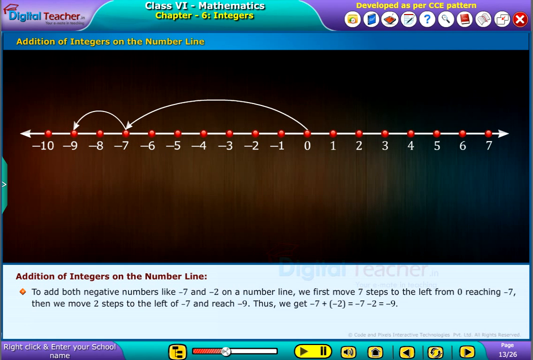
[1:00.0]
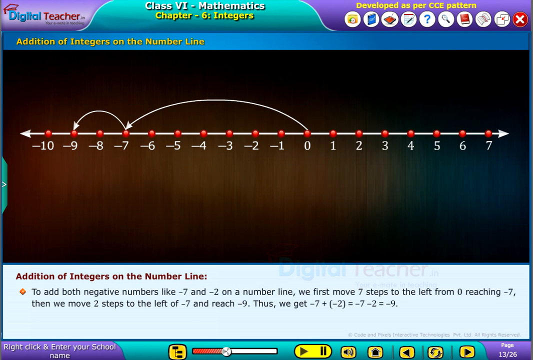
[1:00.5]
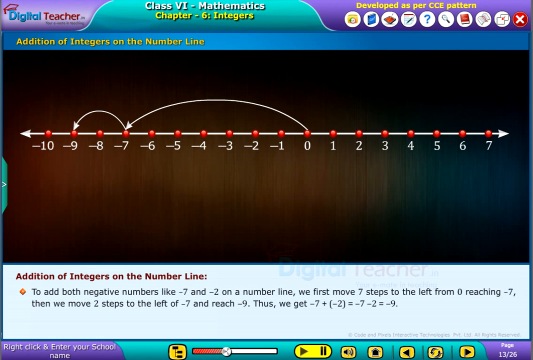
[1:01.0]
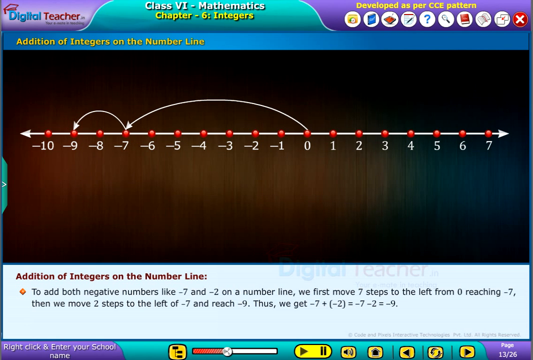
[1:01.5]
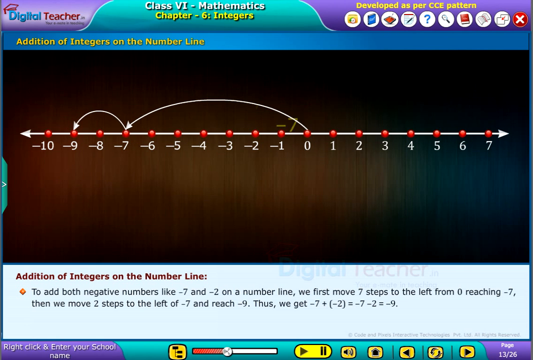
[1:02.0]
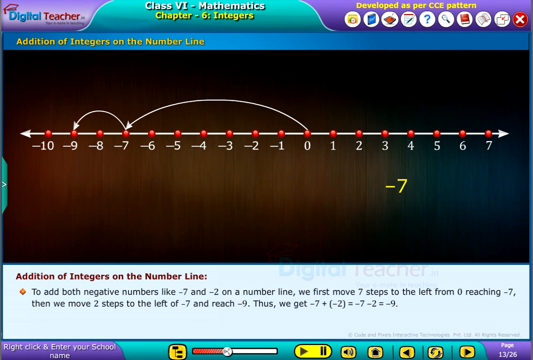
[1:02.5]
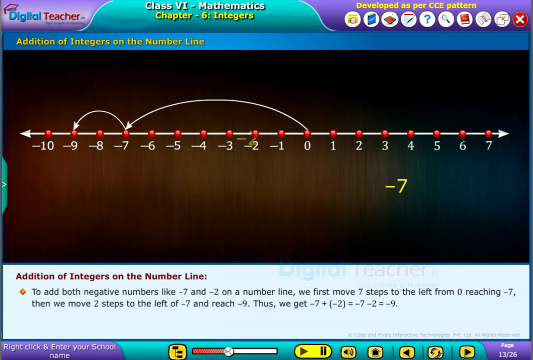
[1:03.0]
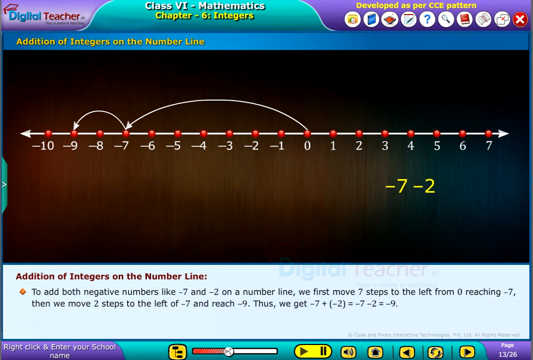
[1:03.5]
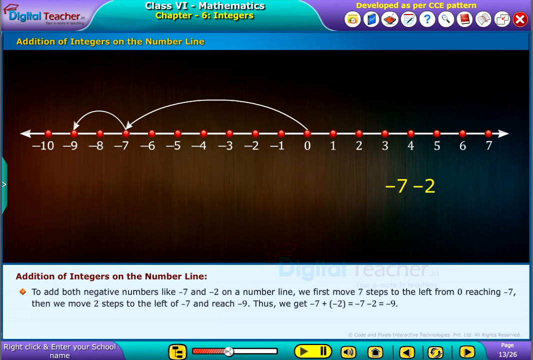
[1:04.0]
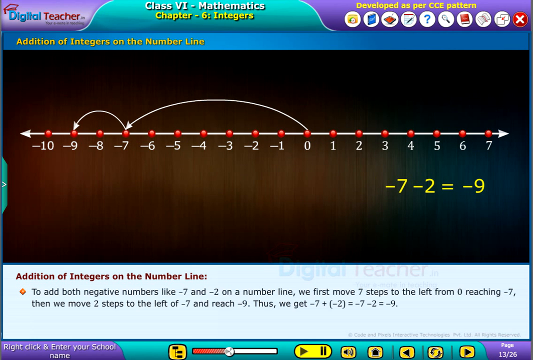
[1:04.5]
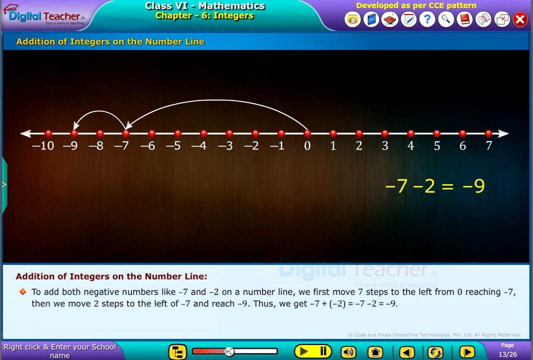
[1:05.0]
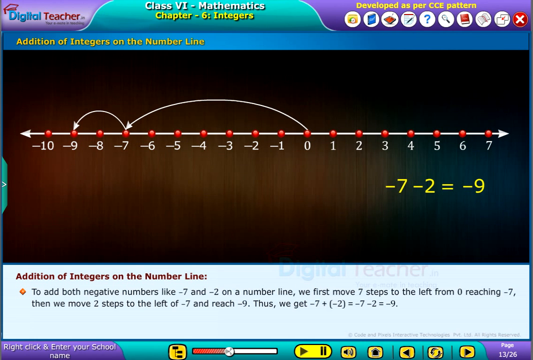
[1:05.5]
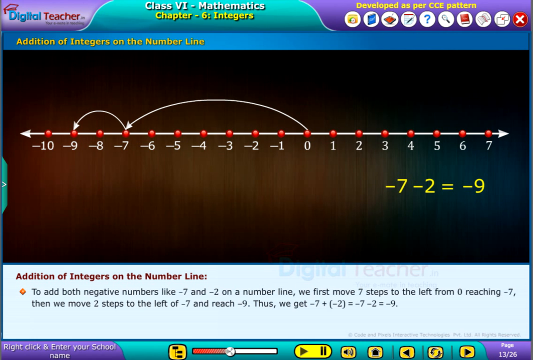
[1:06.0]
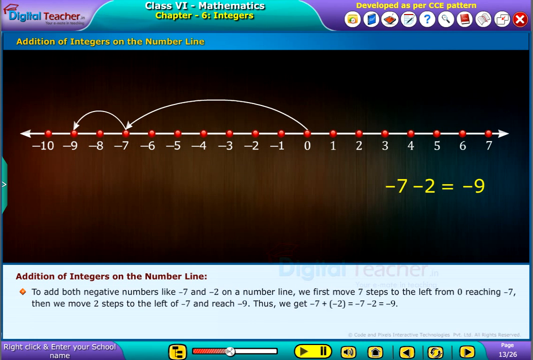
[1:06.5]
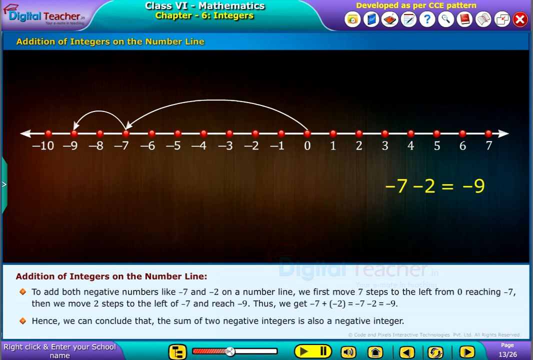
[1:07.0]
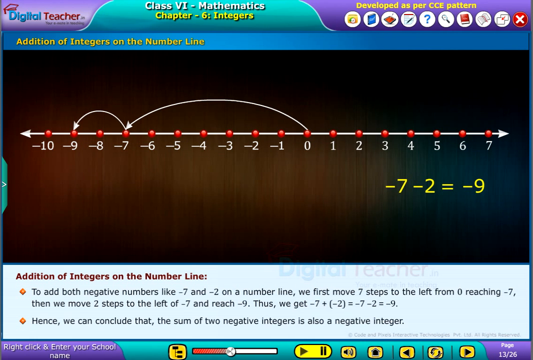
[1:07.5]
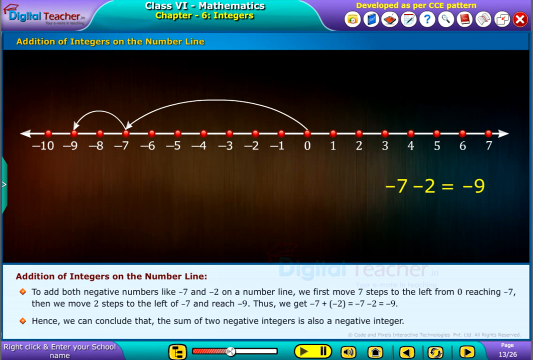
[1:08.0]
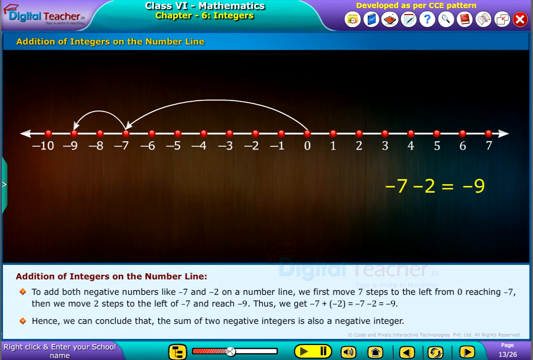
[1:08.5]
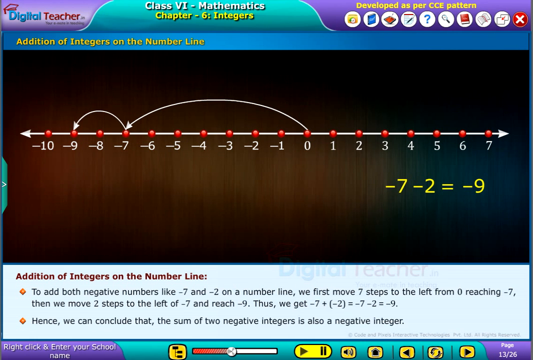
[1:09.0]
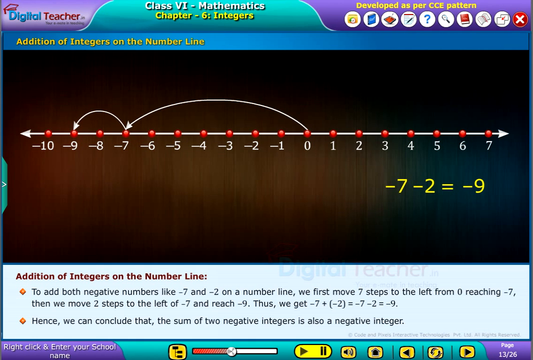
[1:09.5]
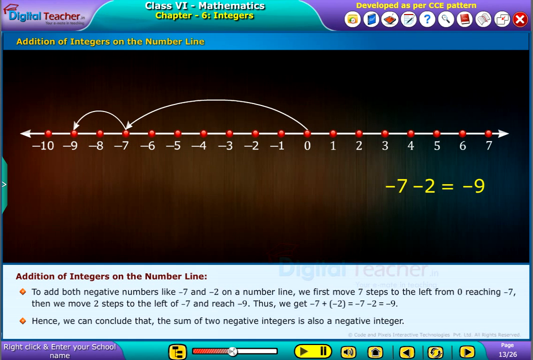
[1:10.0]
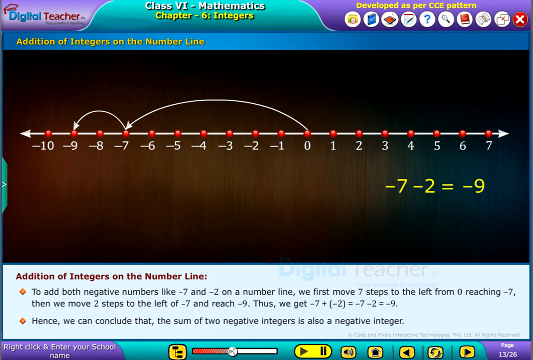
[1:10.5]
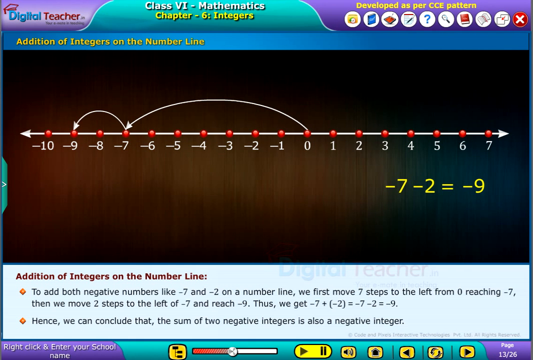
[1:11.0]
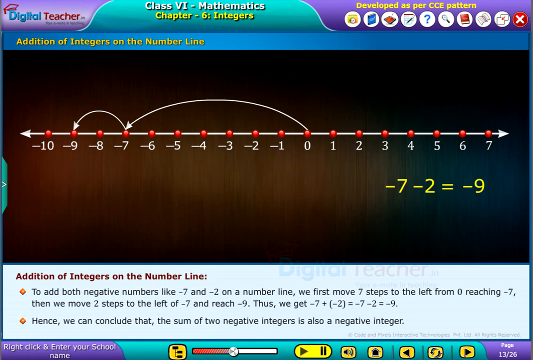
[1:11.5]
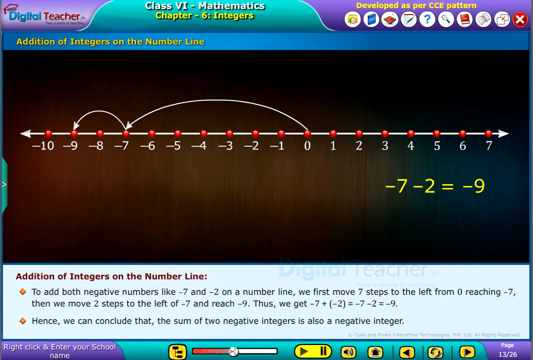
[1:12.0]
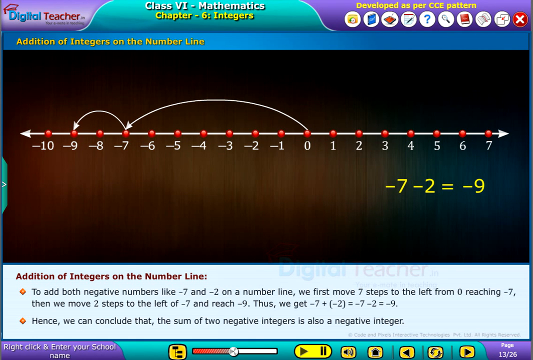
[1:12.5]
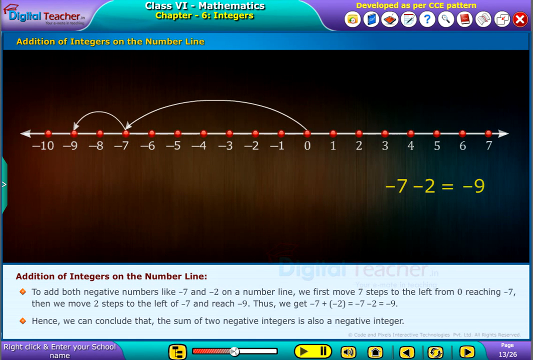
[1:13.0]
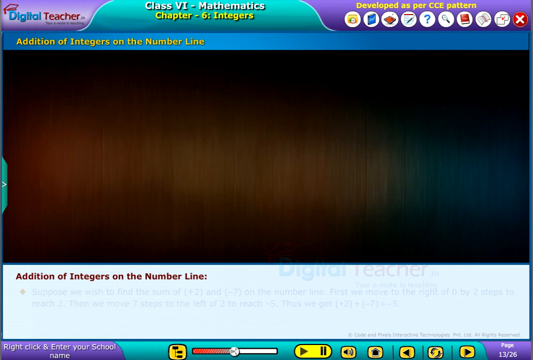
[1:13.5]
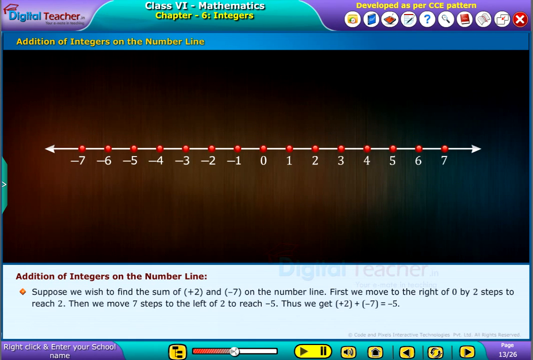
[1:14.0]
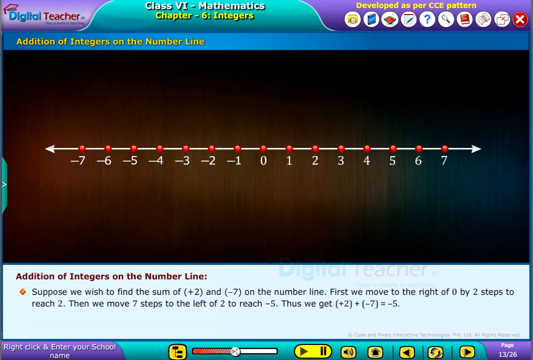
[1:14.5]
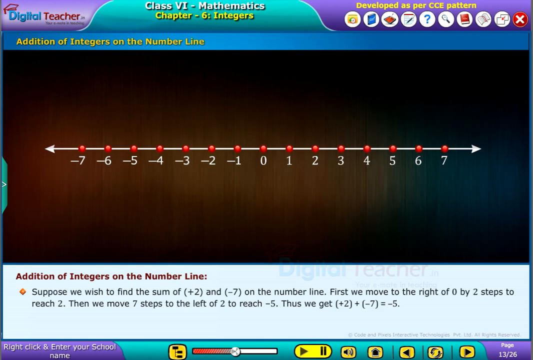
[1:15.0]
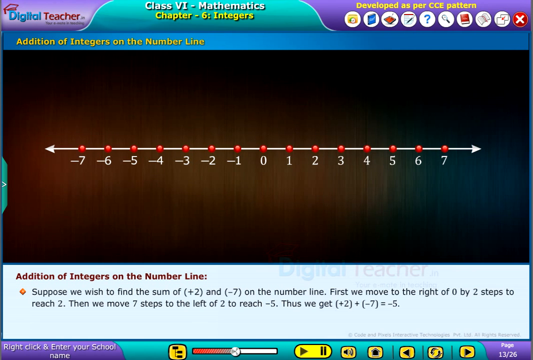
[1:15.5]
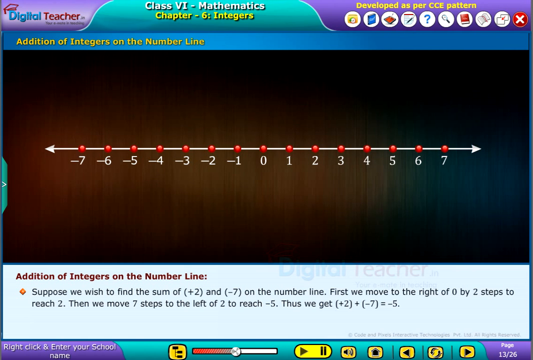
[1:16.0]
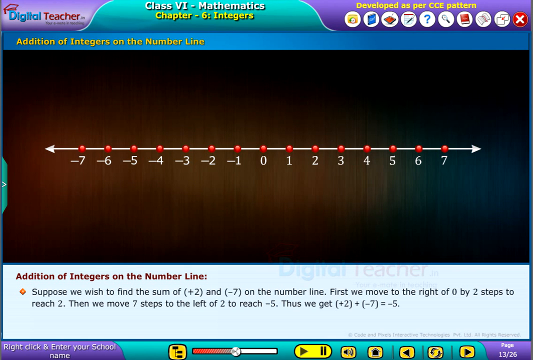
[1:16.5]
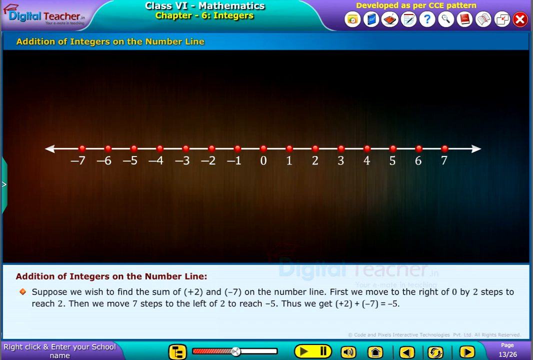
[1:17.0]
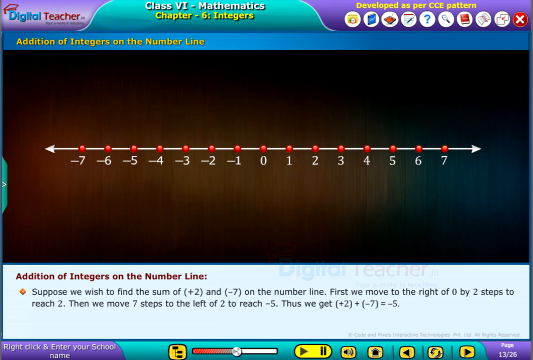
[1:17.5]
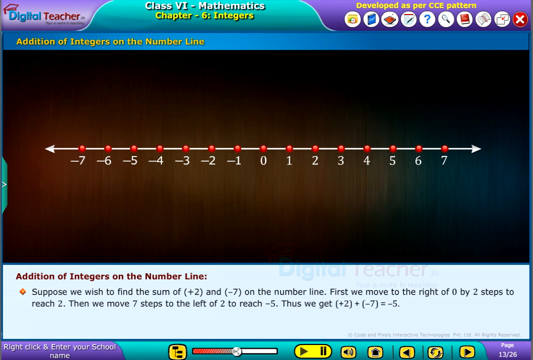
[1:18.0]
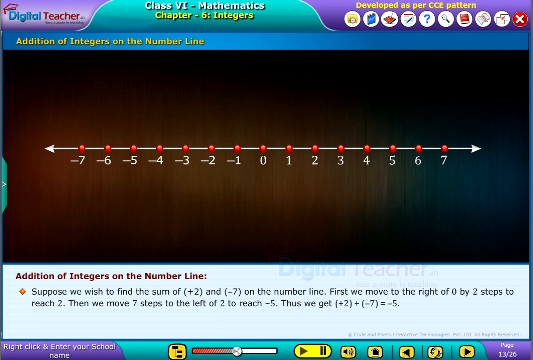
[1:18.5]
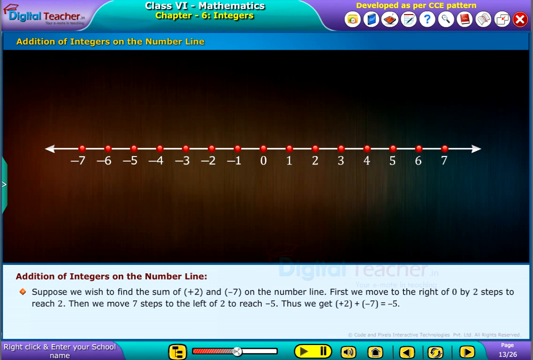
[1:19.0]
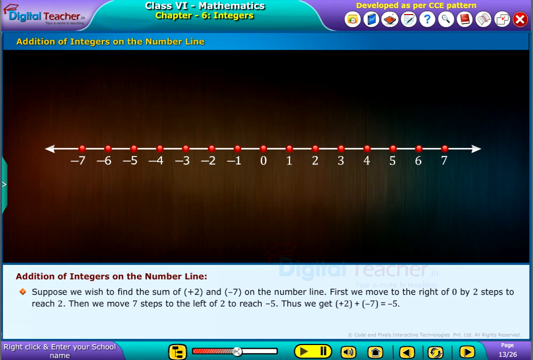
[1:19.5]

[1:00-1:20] With the arrows on the number line, yellow text reads "negative 7 minus 2 equals negative 9", and a new bullet point in the content below says "hence we can conclude that the sum of two negative integers is also a negative integer". A new bullet point then replaces all of that: "suppose we wish to find the sum of positive 2 and negative 7 on the number line. First we move to the right of 0 by two steps to reach 2. Then we move seven steps to the left of 2 to reach negative 5. Thus we get plus 2 plus negative 7 equals negative 5." The number line is now bare, with the arrows gone.